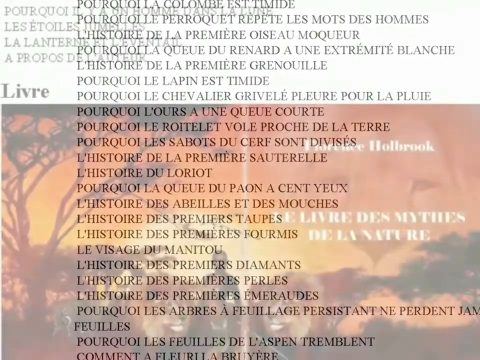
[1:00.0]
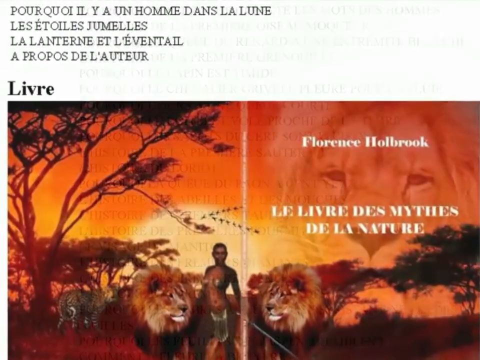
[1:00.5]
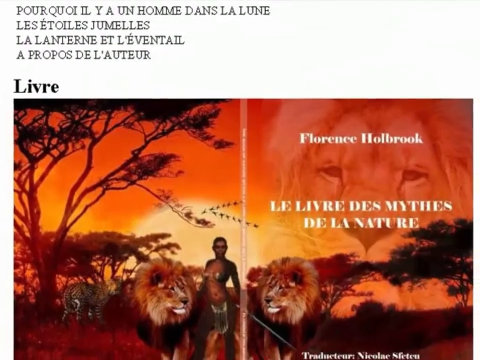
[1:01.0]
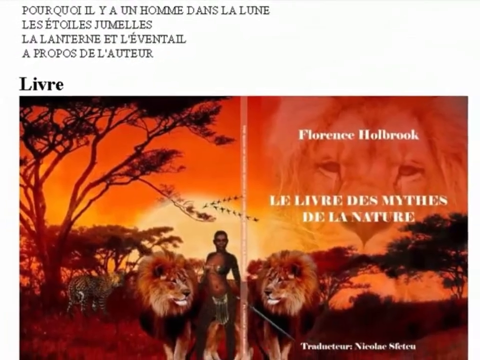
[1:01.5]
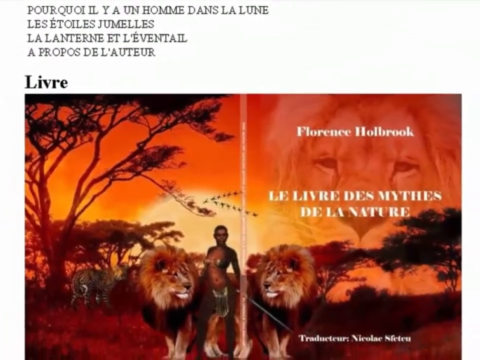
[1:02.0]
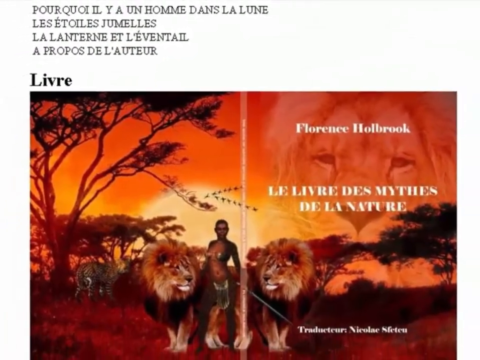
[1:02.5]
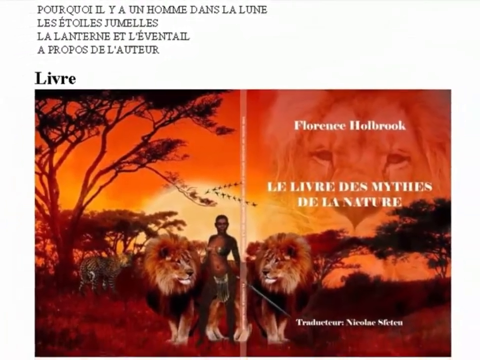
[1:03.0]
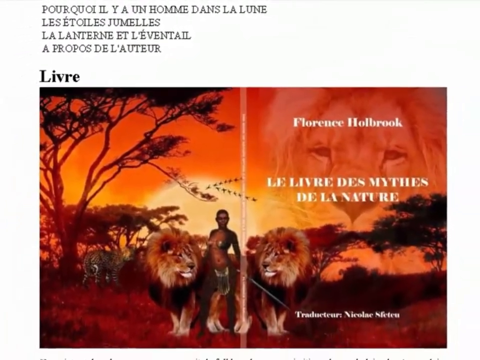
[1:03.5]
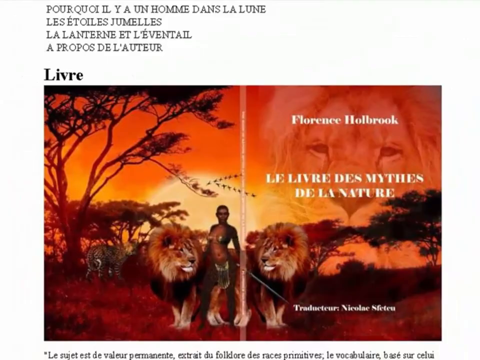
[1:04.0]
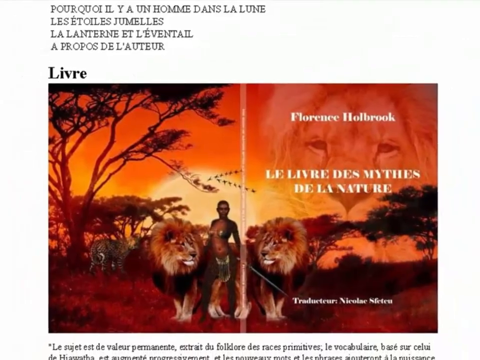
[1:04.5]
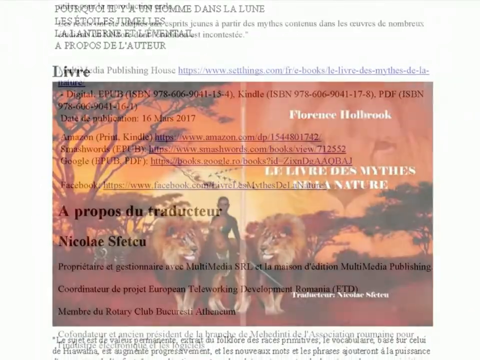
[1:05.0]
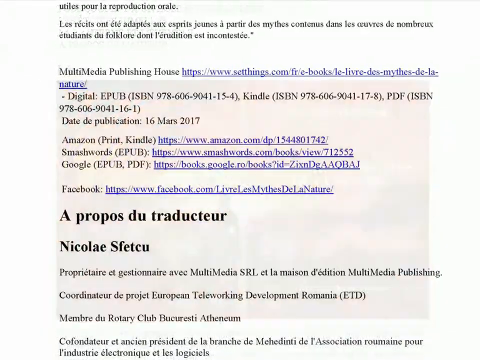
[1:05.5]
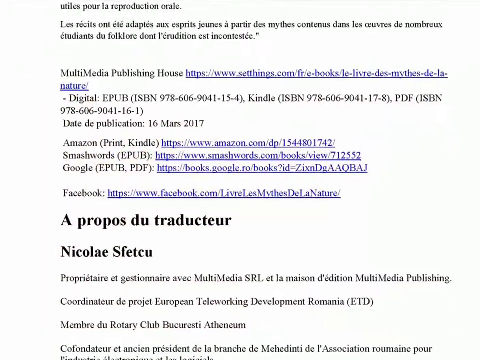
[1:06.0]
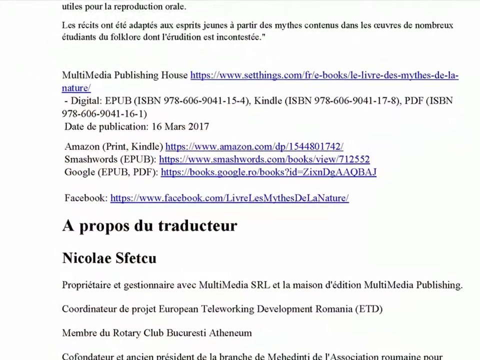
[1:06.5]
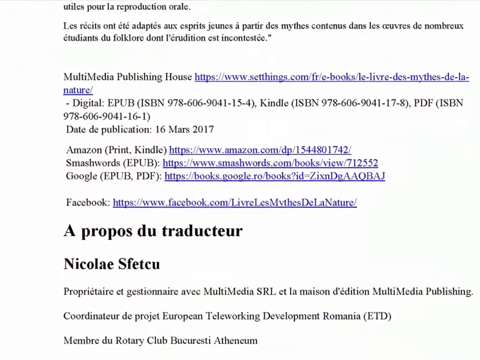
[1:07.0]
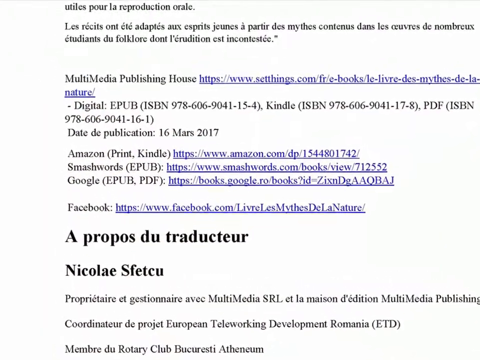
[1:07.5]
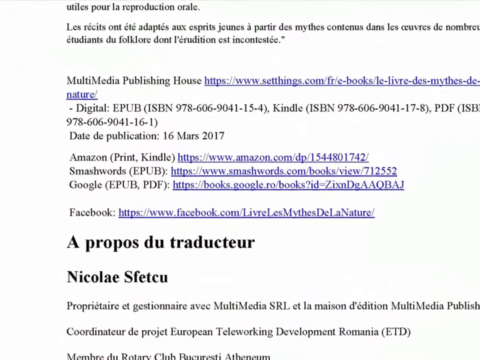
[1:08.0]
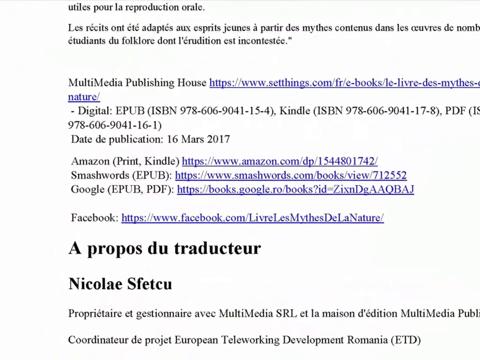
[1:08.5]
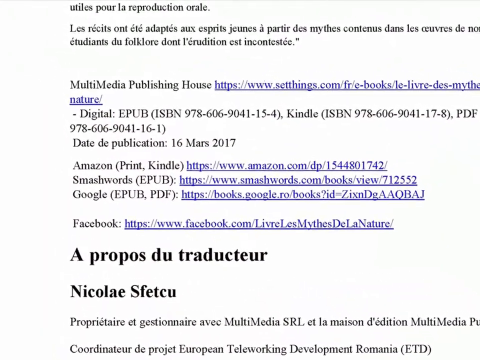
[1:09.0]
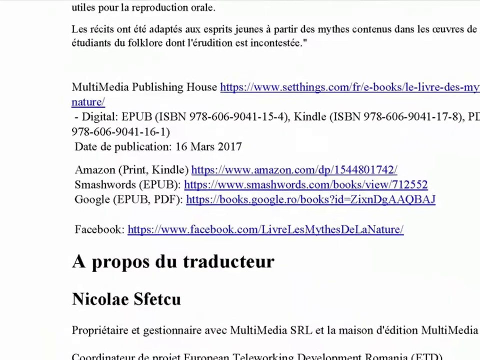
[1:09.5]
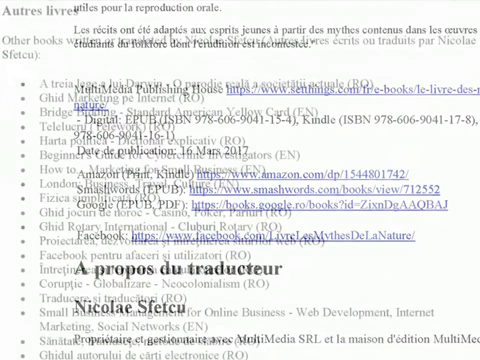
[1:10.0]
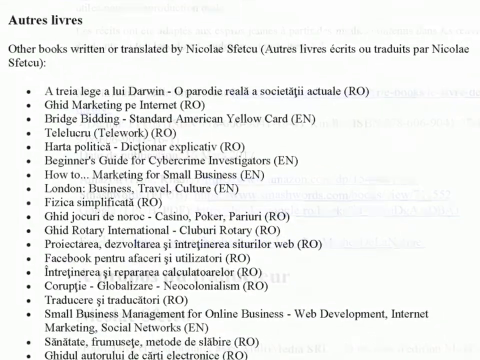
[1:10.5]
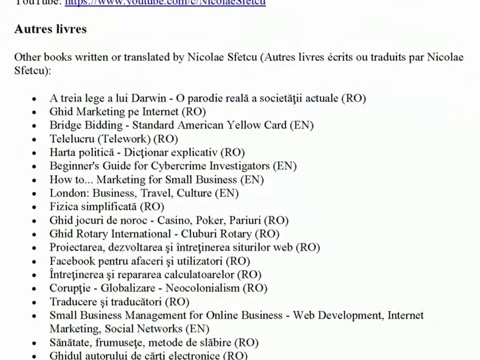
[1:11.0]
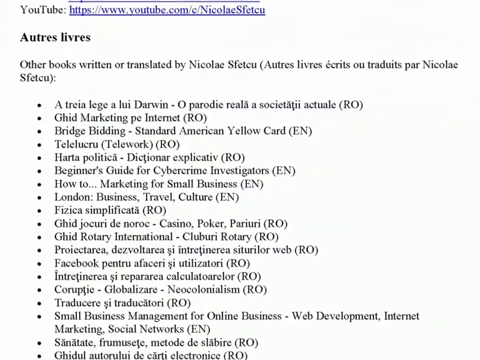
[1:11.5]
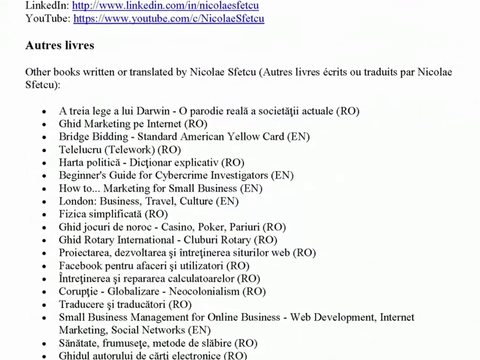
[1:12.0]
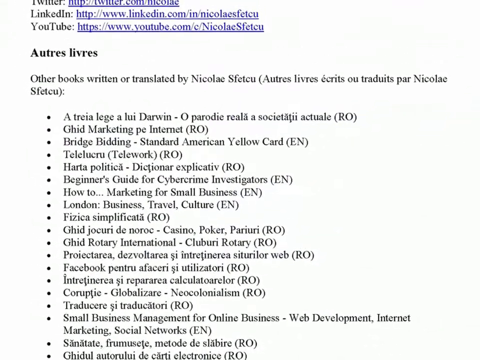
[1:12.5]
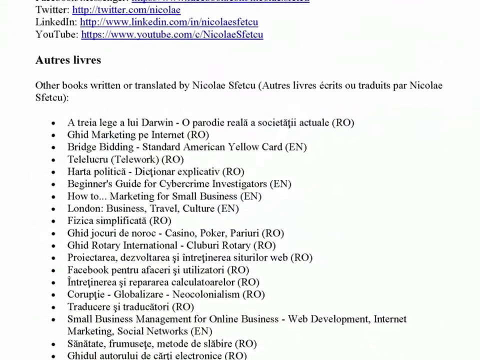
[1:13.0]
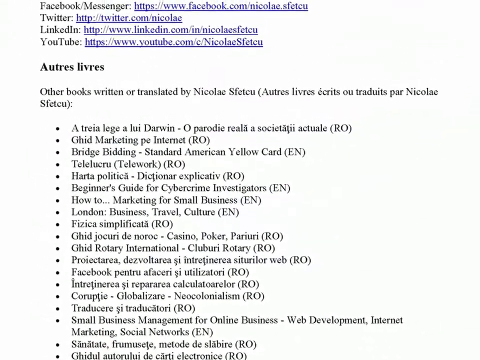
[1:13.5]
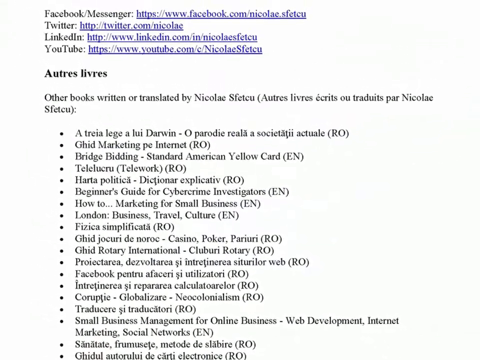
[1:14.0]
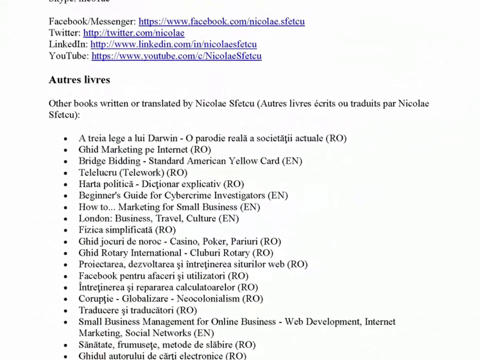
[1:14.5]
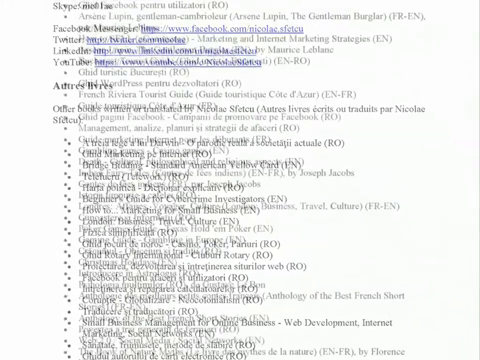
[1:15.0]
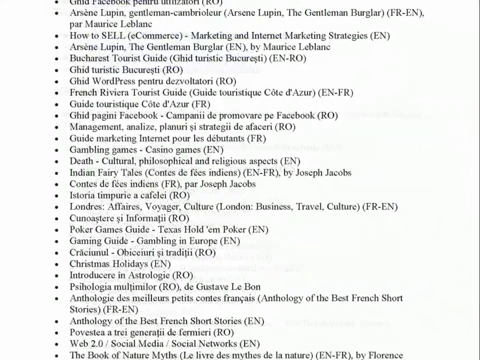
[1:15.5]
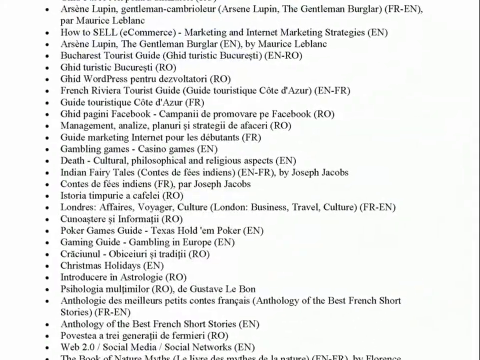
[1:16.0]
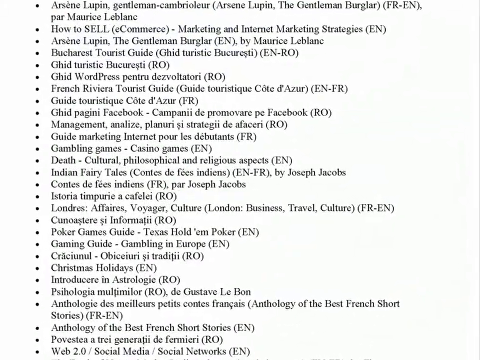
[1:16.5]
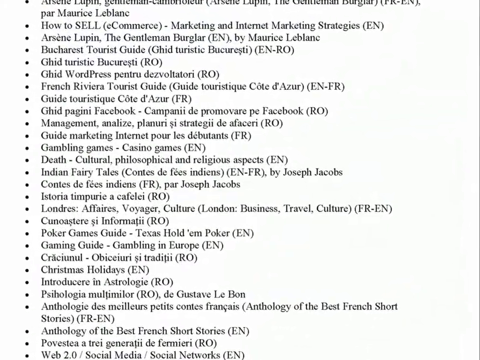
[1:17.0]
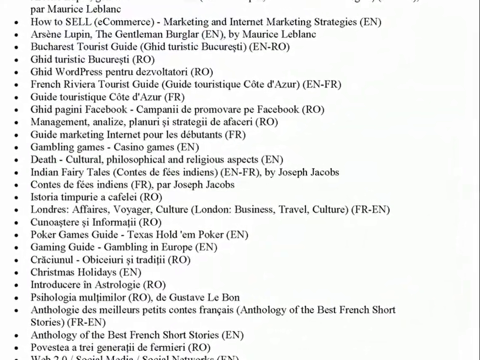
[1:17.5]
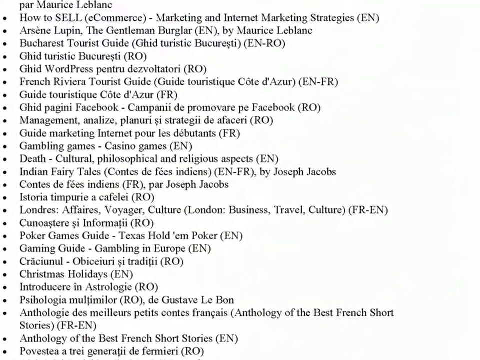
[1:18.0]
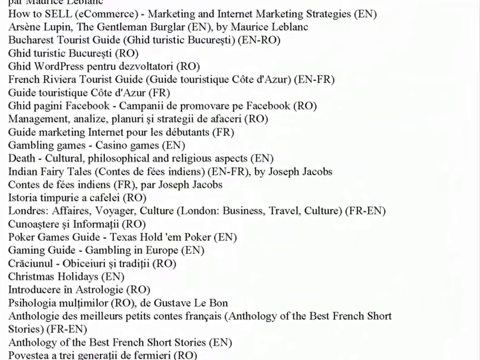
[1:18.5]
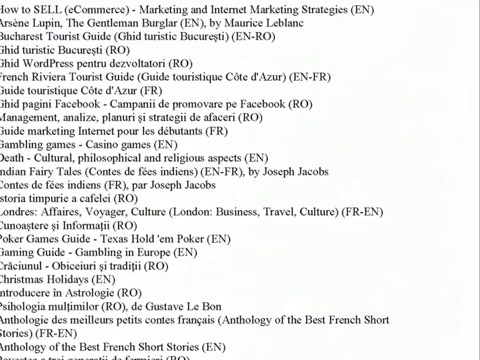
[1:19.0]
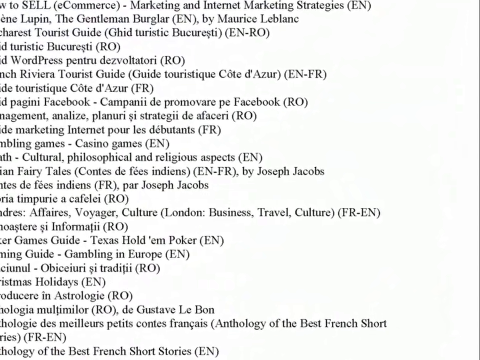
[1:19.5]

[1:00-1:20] A colored artwork appears at the bottom of the page, done in a somewhat photorealistic style: a woman wearing a bikini and a loincloth stands between two lions. It appears to be the cover of a book laid flat, showing both front and back. A sunset is behind the woman and the trees surrounding her, and there appears to be a field. On the front page, a ghostly head of a lion is in the background. The camera shows this for a moment and zooms out, then transitions to a page with more text, including multiple links to websites such as Amazon, Smashworks, Google, and Facebook. Another transition shows a page with multiple points at the bottom; as the camera zooms out to a wider view, more links appear at the top. A further transition shows another page that appears to be a bibliography, with different books and languages shown next to them. The camera moves toward the right of this page and zooms in.